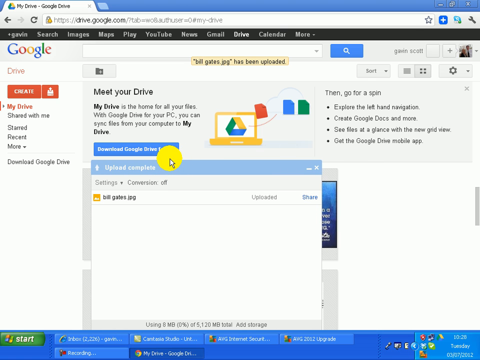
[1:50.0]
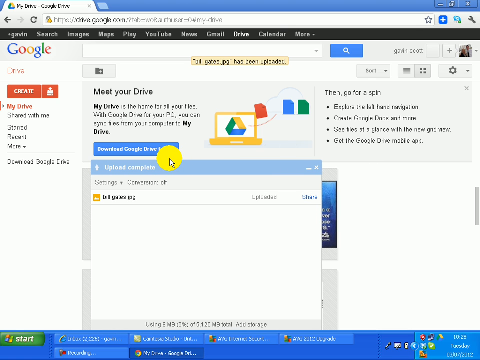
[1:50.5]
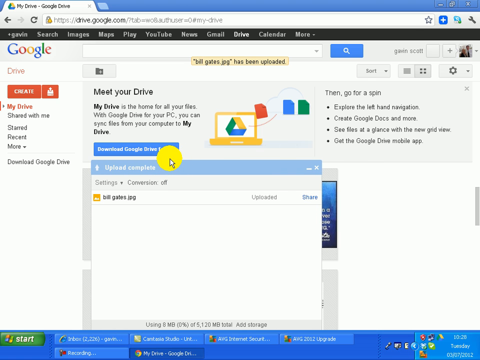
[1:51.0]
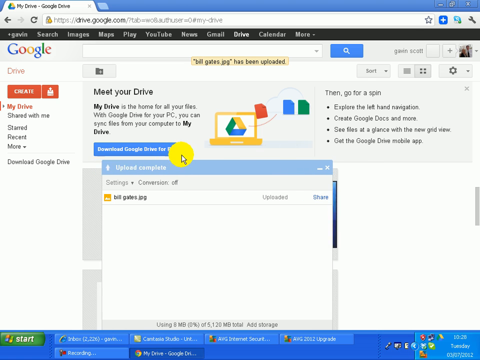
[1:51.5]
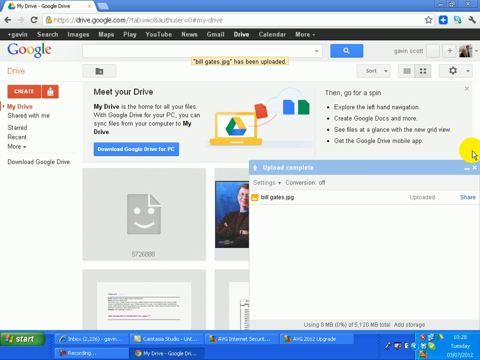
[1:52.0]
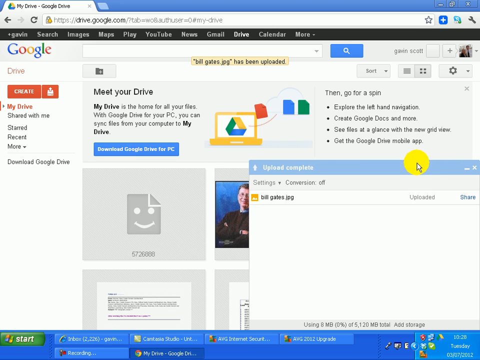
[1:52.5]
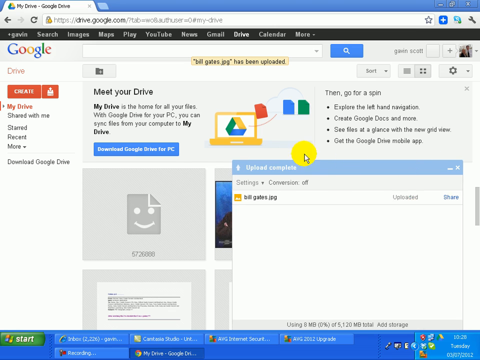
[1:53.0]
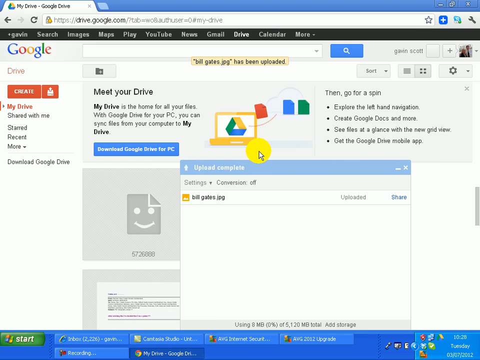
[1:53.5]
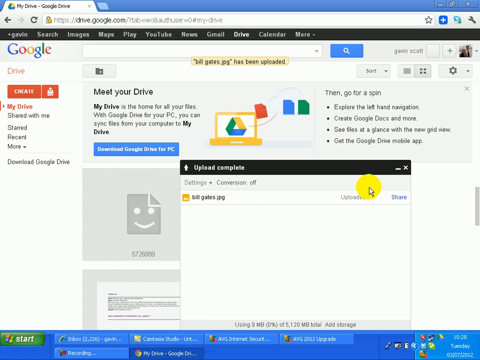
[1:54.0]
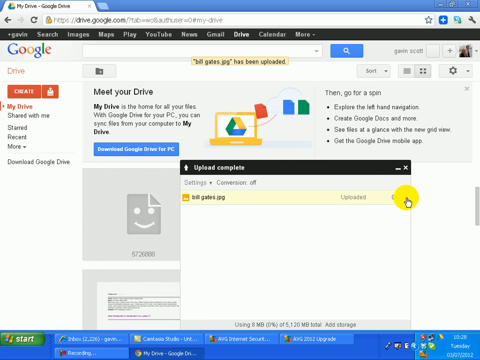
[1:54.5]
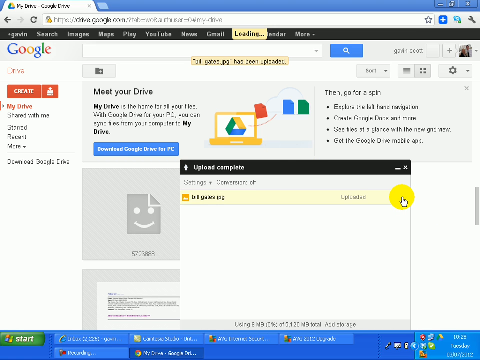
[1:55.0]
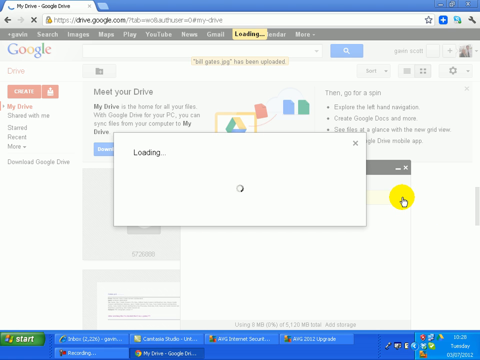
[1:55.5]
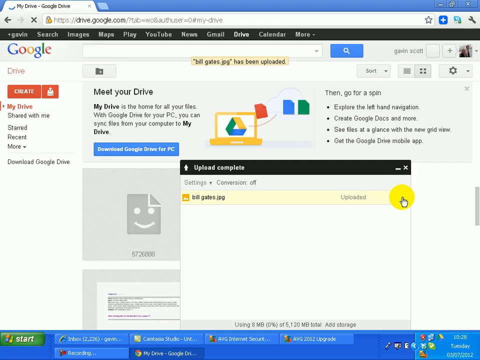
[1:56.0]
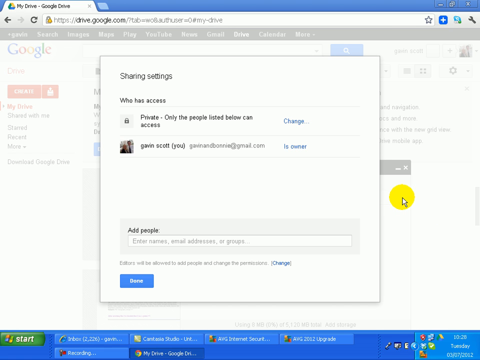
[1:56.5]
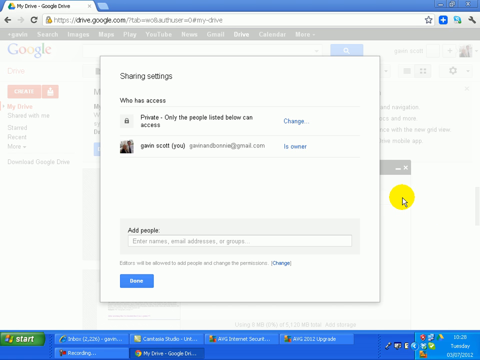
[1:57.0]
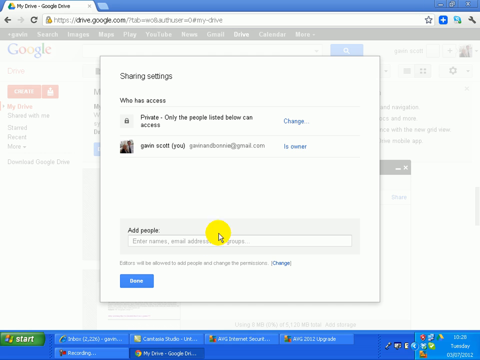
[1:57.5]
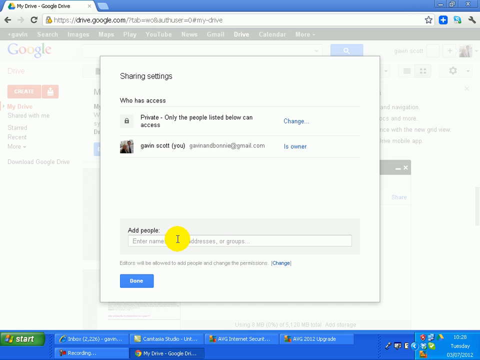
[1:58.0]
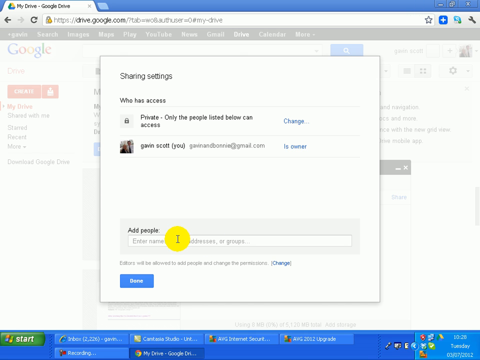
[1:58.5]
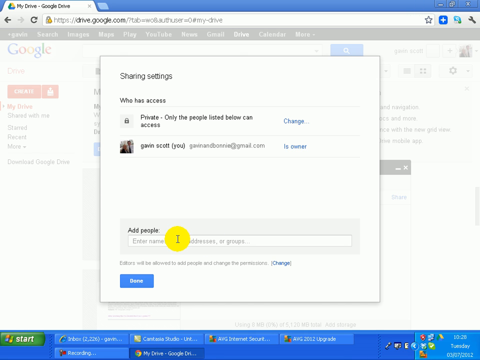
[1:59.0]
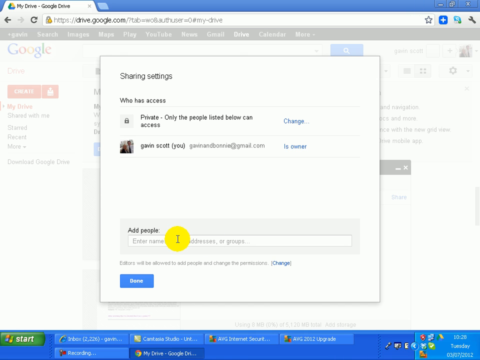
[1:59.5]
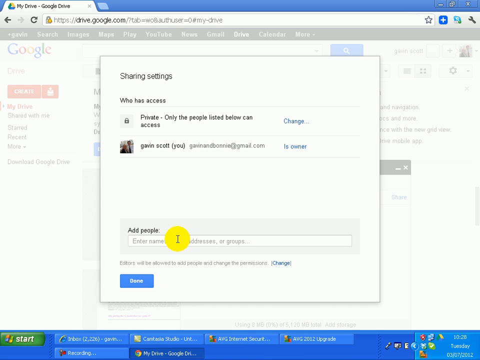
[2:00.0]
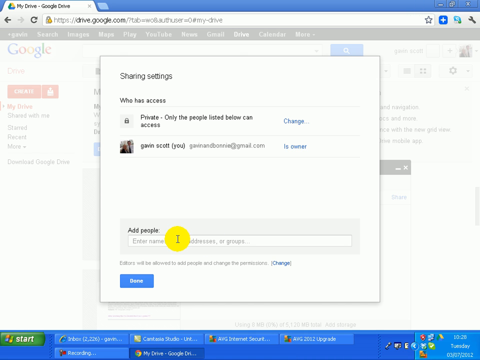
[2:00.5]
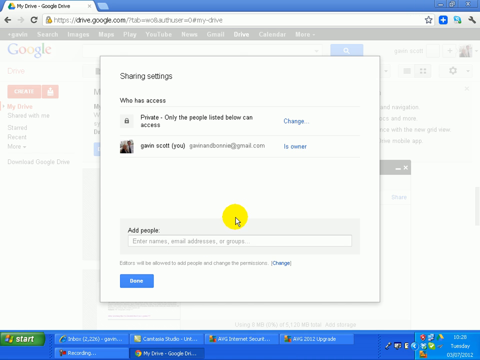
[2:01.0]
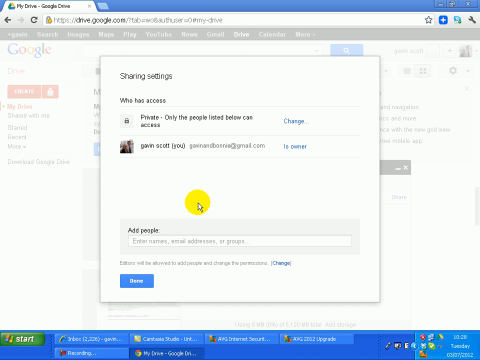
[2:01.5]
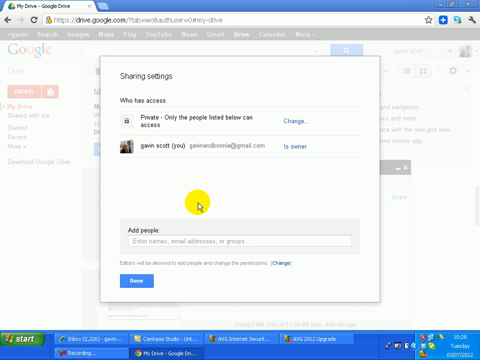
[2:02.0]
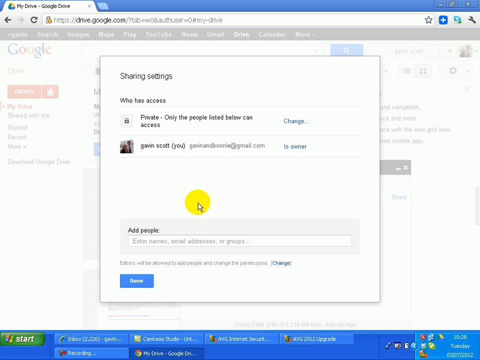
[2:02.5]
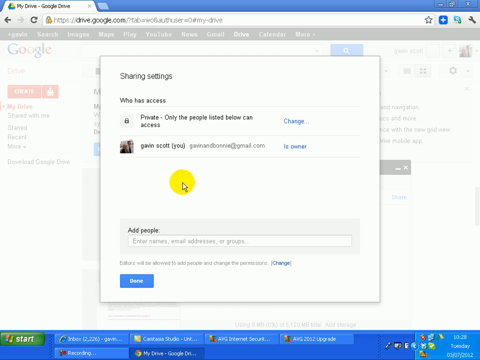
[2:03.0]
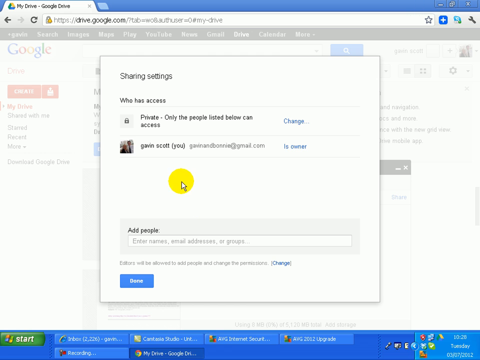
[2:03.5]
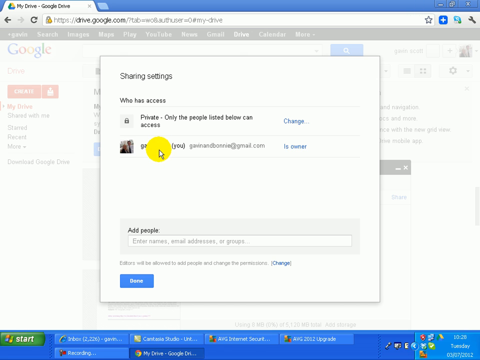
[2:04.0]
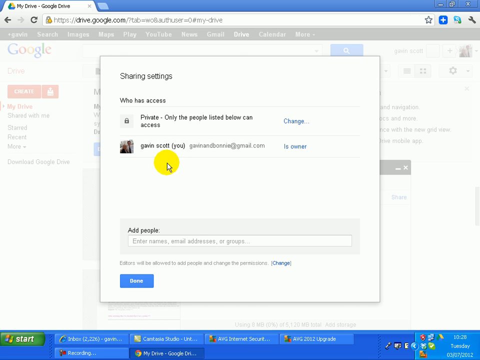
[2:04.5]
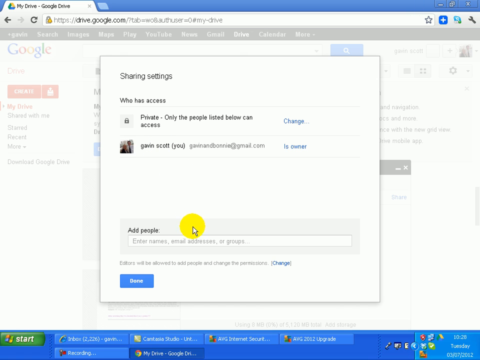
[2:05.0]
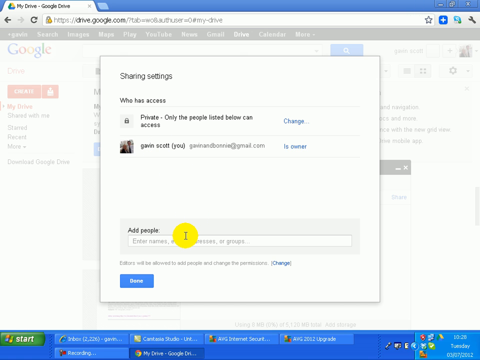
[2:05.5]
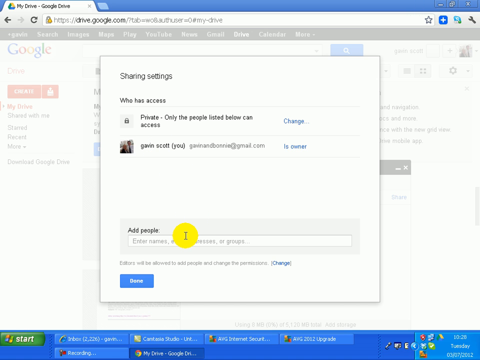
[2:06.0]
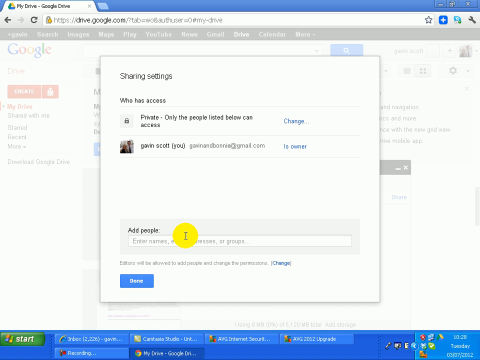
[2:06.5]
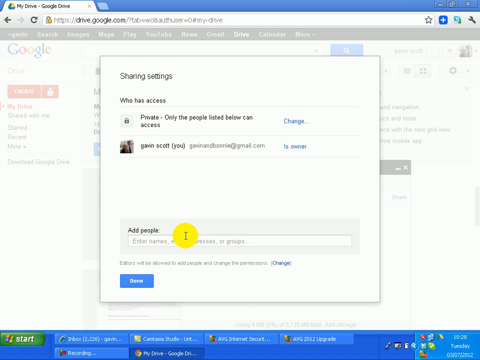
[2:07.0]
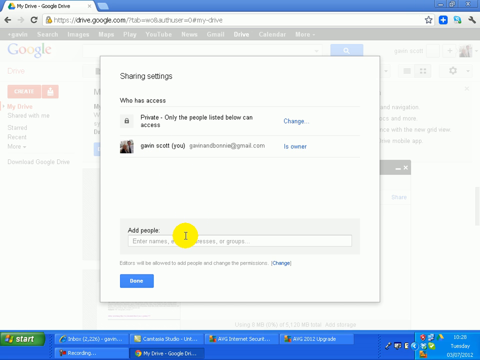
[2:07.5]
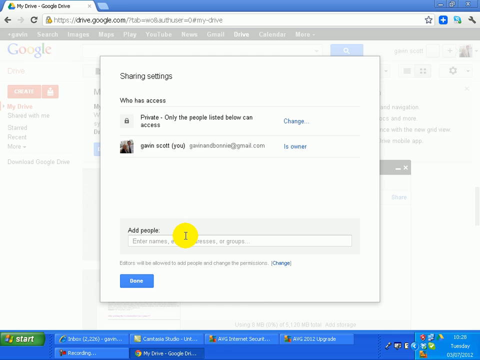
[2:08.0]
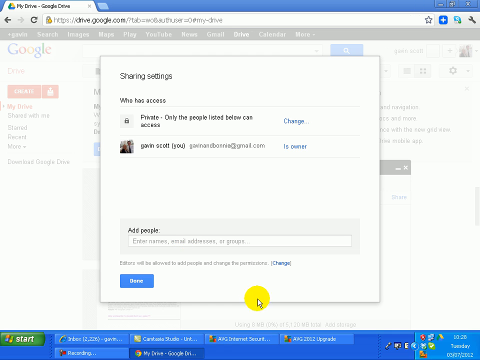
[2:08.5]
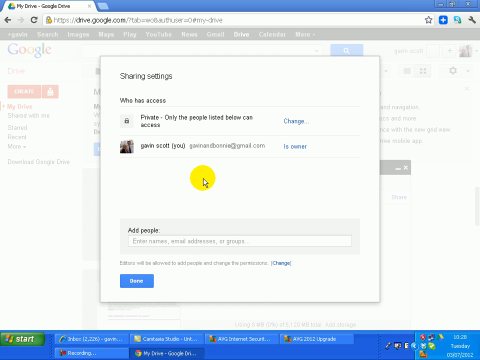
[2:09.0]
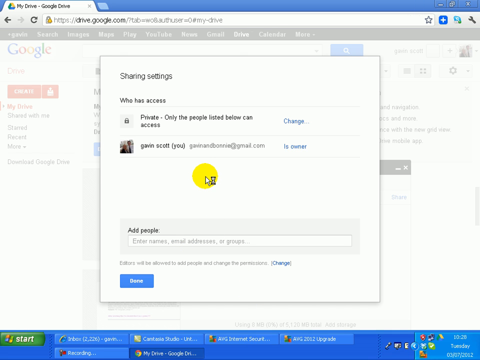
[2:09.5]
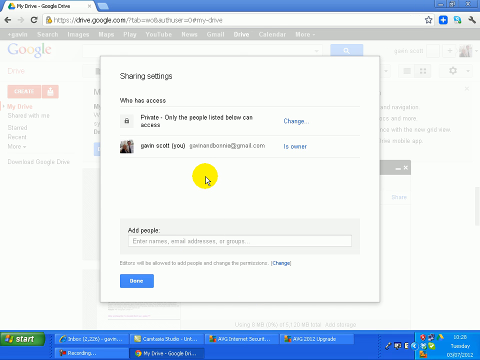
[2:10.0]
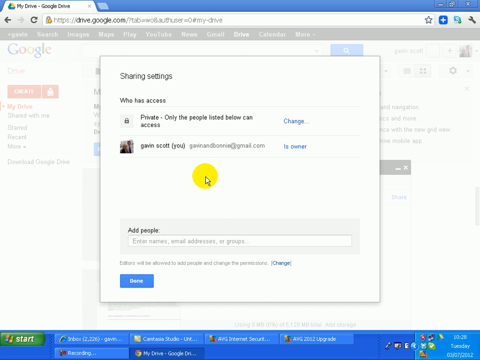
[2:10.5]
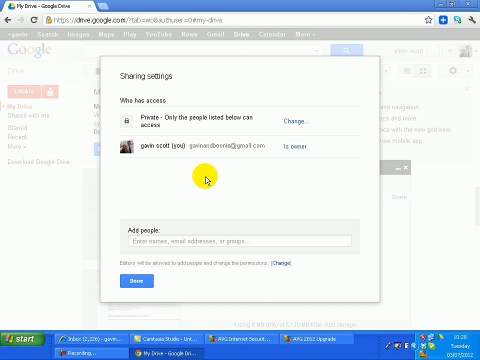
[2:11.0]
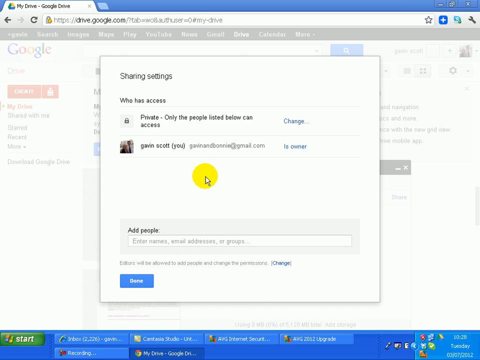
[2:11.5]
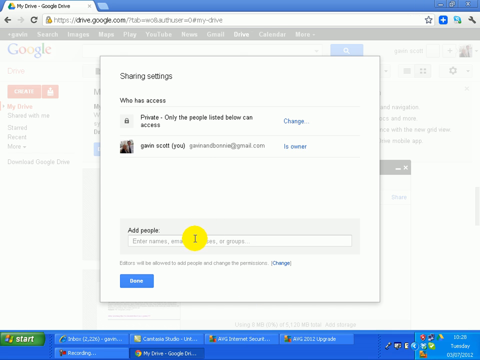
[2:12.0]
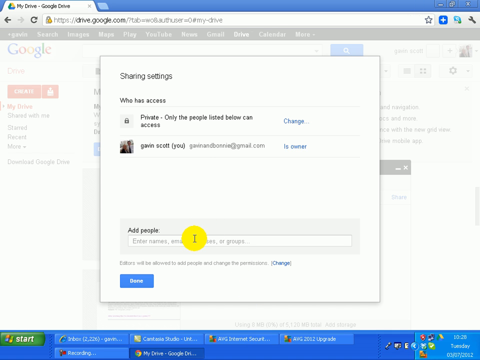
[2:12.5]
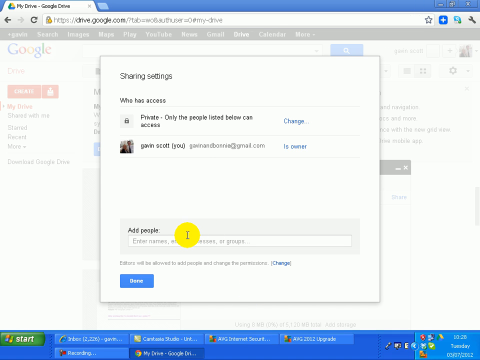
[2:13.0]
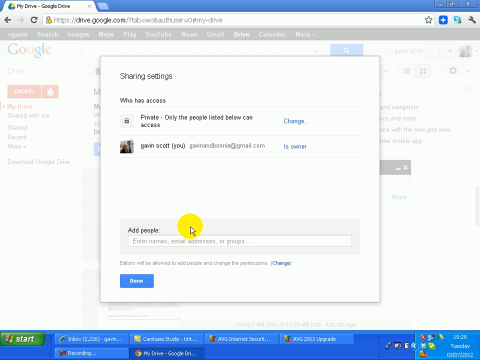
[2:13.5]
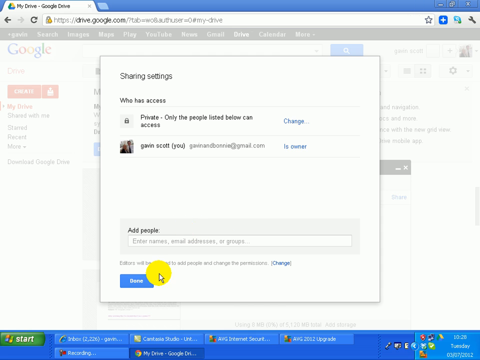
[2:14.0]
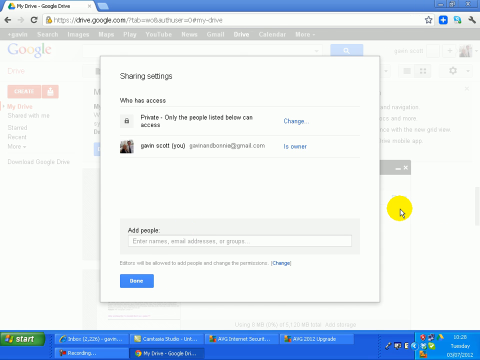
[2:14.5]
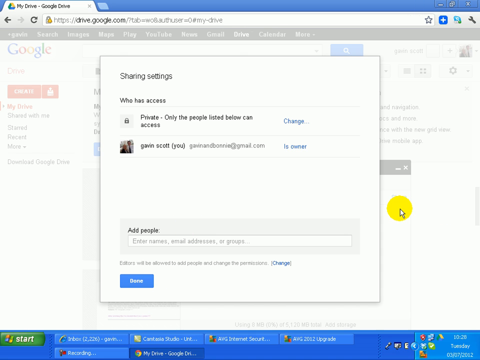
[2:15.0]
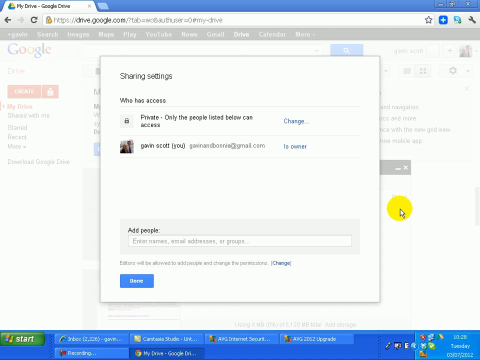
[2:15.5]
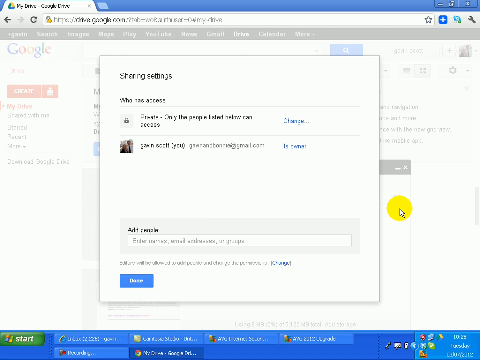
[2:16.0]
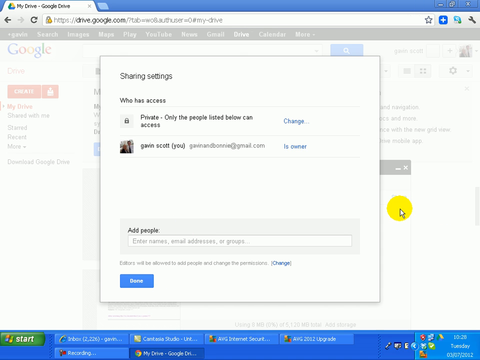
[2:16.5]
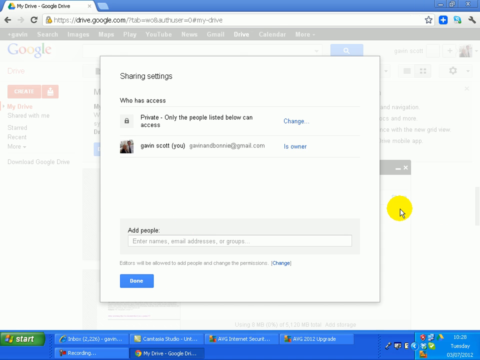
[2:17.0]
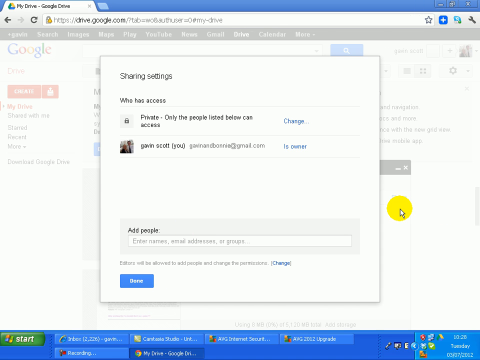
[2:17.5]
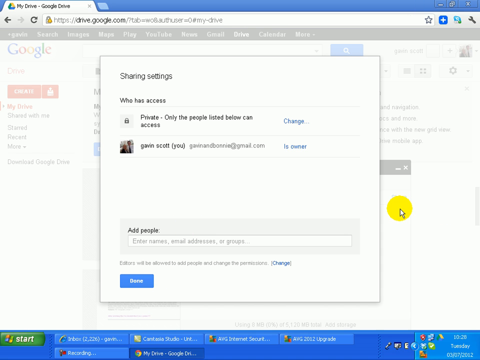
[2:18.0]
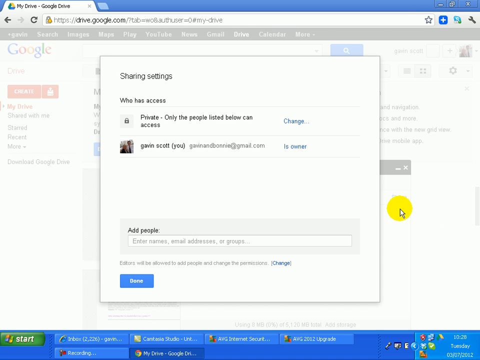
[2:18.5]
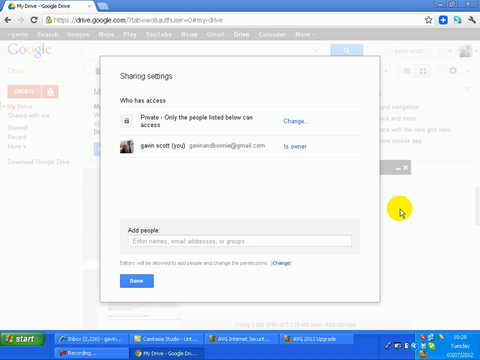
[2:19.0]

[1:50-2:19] The man keeps moving the cursor around and reaches "add people", changing the sharing settings, with the yellow dot on add people. He has not typed in anyone's name or clicked done. The top choice appears to be "private, only the people listed below", with another choice right underneath it. The screen does not show who is in the group.